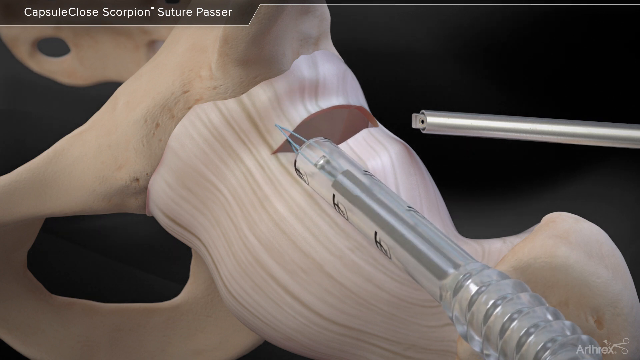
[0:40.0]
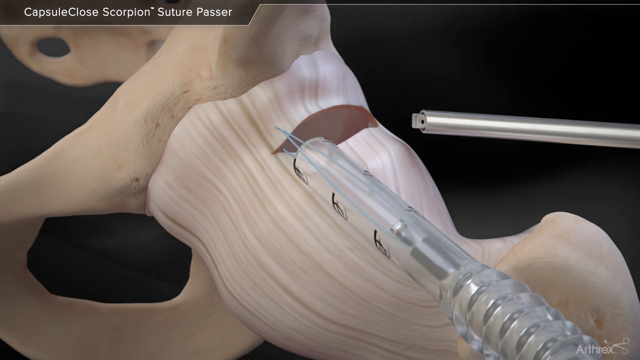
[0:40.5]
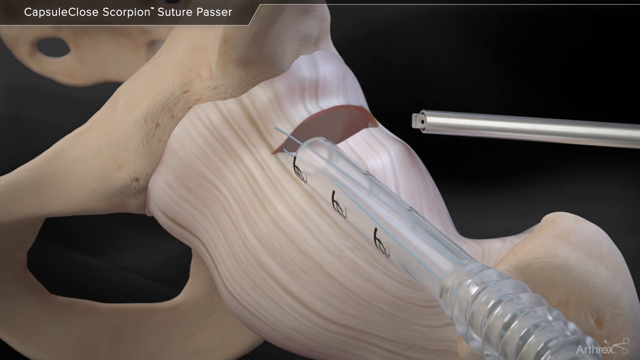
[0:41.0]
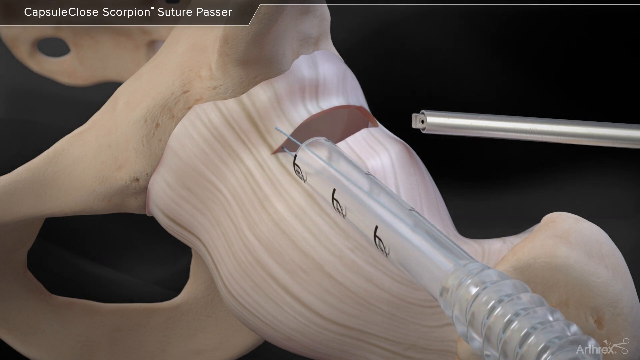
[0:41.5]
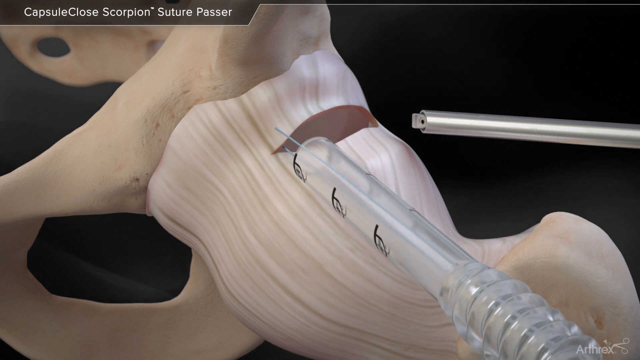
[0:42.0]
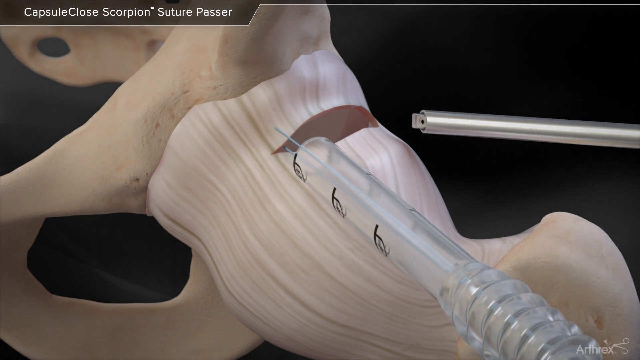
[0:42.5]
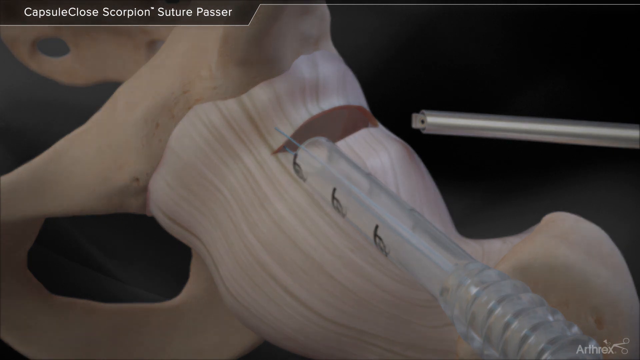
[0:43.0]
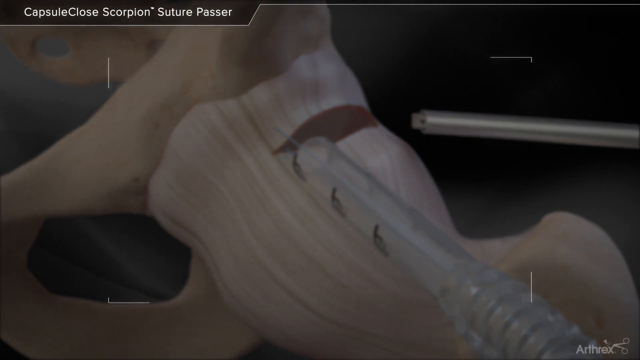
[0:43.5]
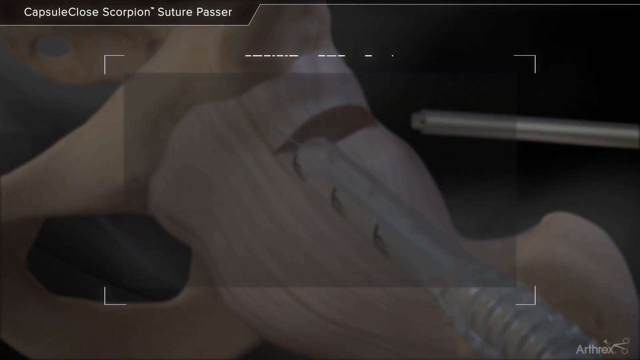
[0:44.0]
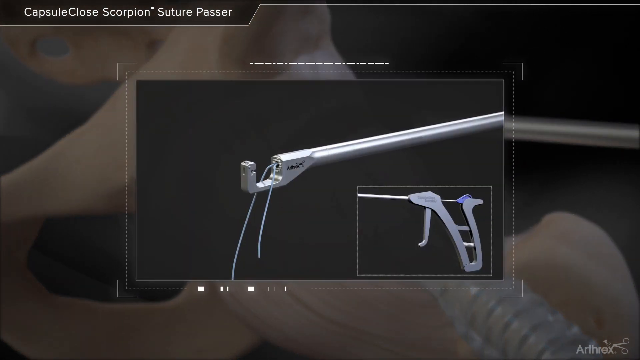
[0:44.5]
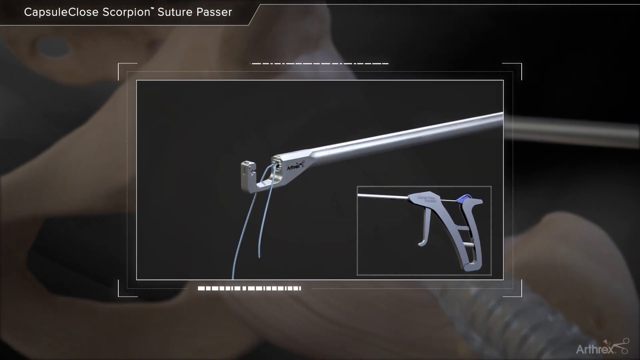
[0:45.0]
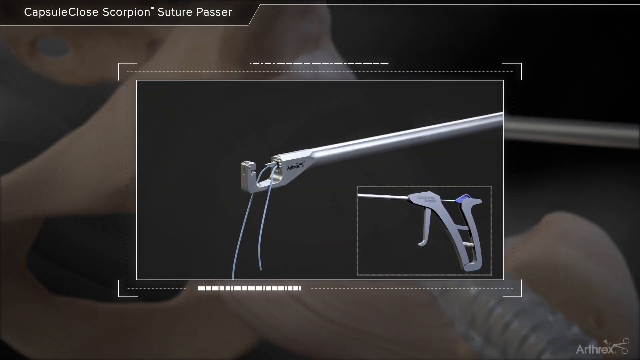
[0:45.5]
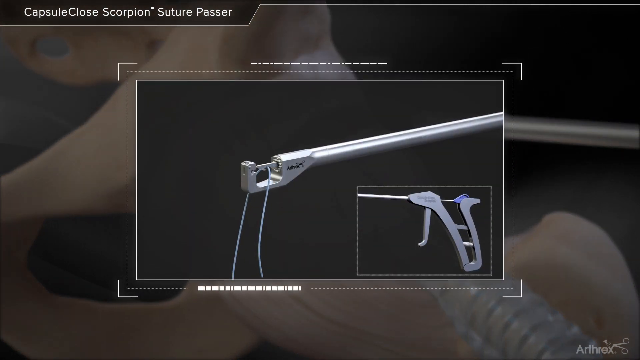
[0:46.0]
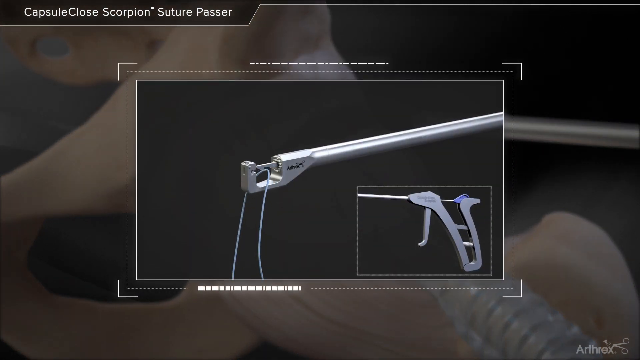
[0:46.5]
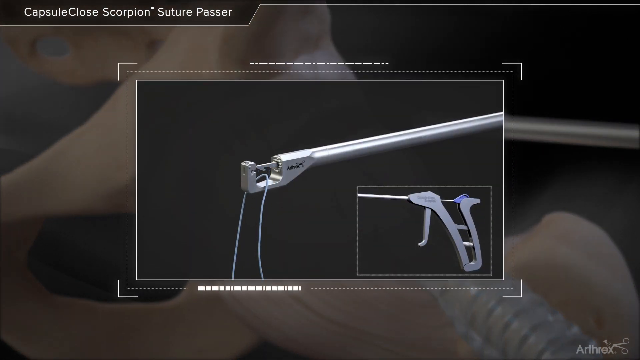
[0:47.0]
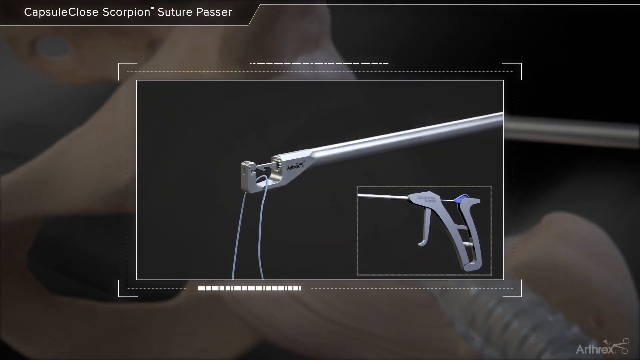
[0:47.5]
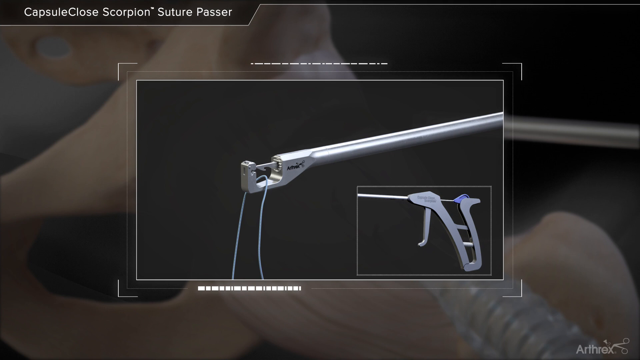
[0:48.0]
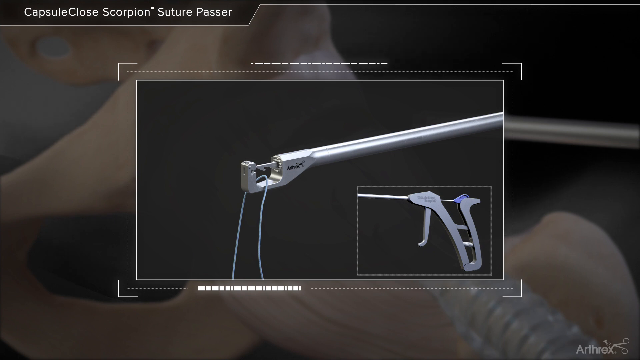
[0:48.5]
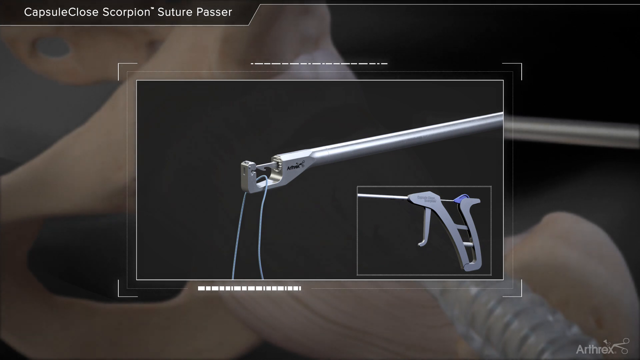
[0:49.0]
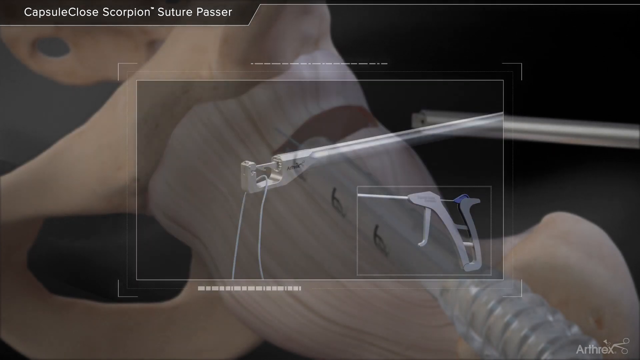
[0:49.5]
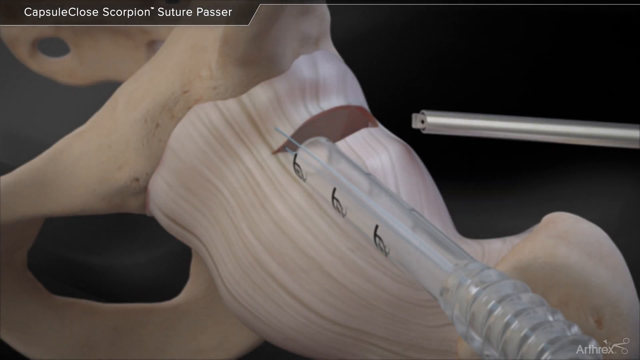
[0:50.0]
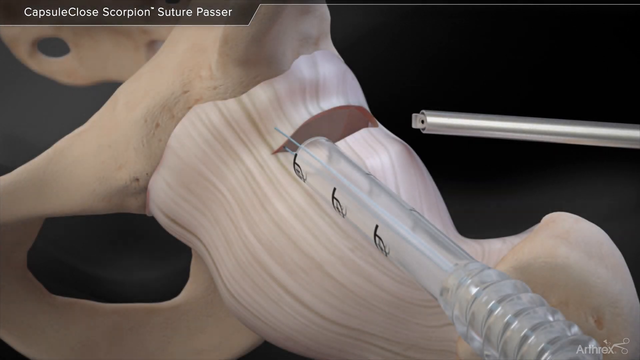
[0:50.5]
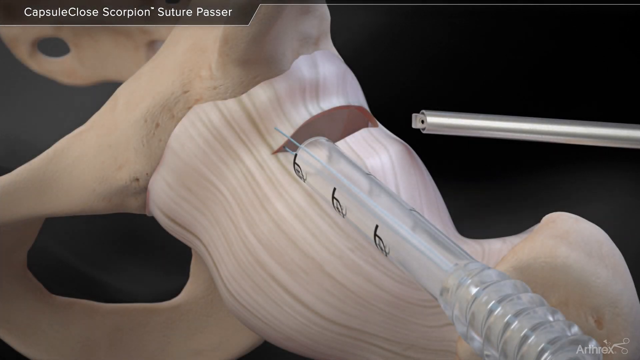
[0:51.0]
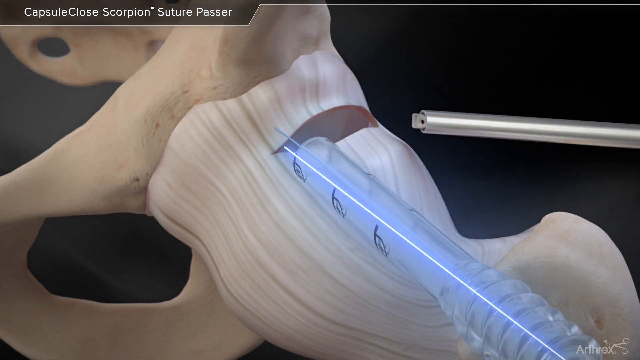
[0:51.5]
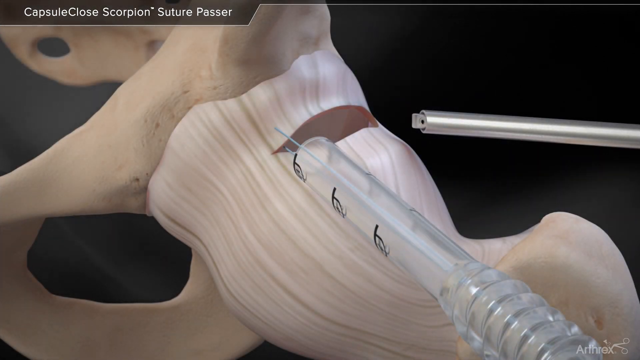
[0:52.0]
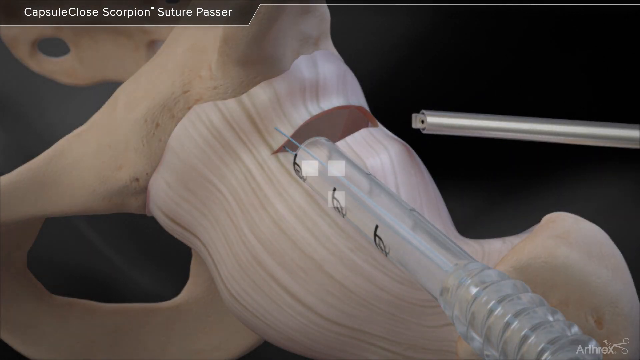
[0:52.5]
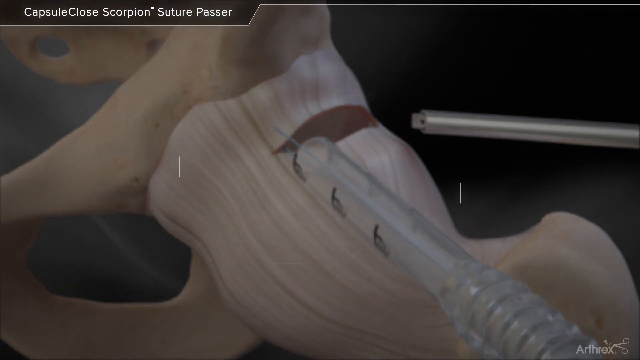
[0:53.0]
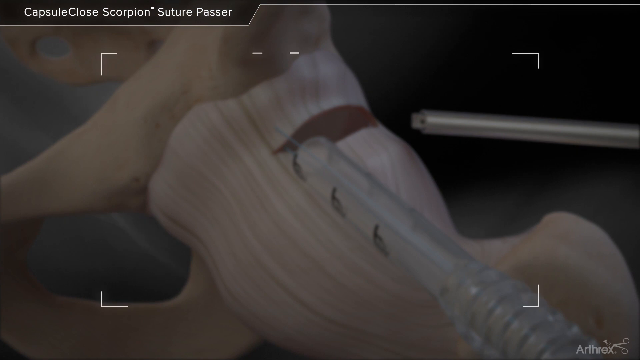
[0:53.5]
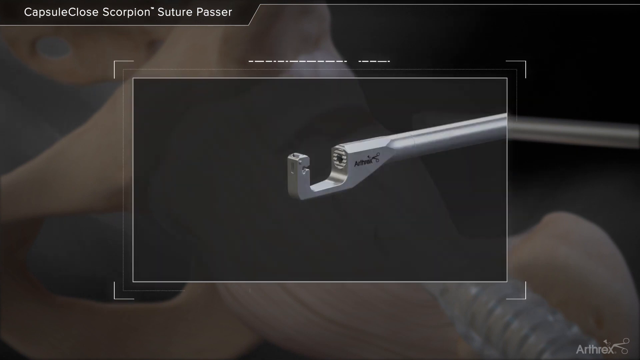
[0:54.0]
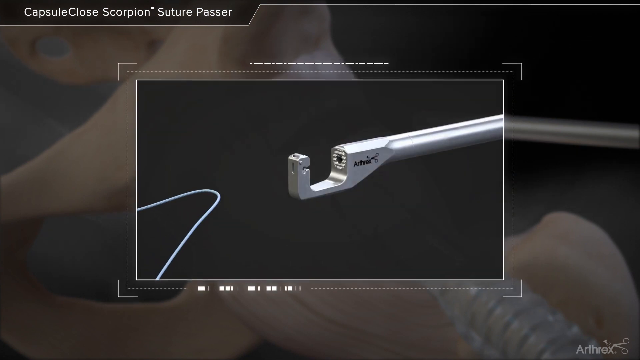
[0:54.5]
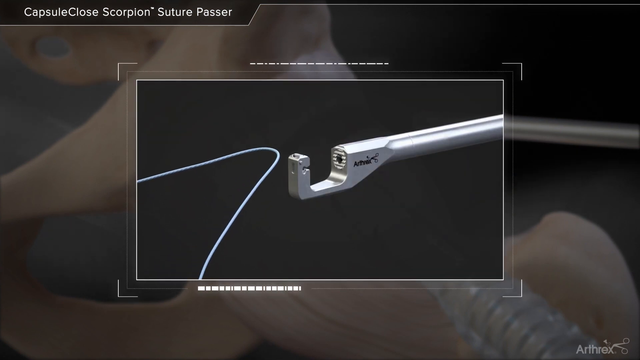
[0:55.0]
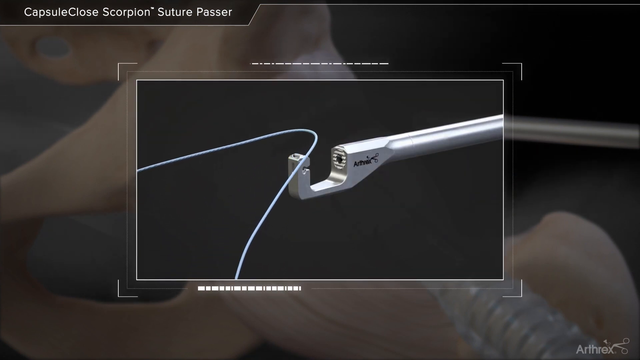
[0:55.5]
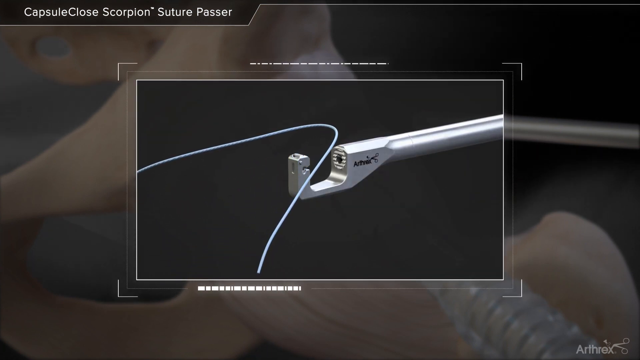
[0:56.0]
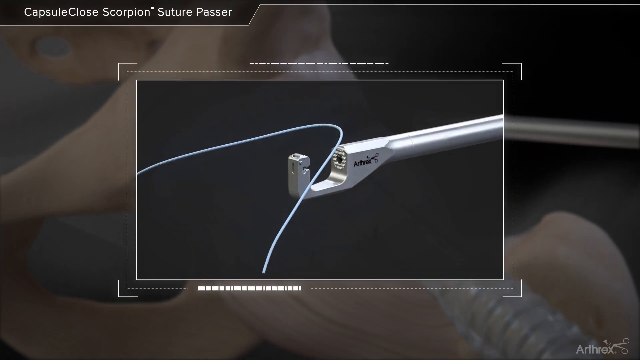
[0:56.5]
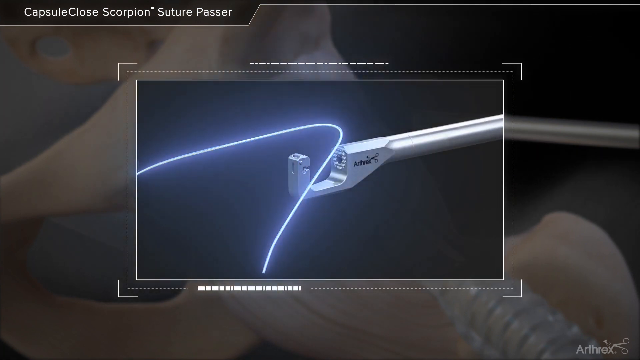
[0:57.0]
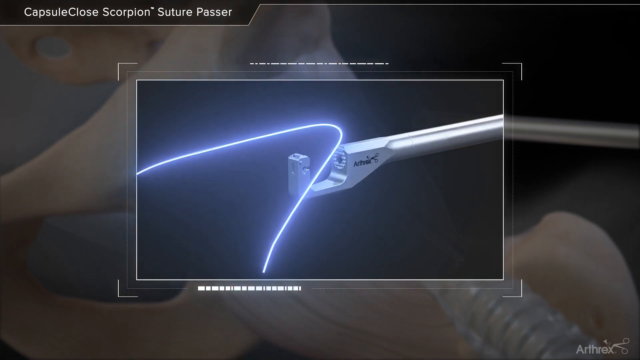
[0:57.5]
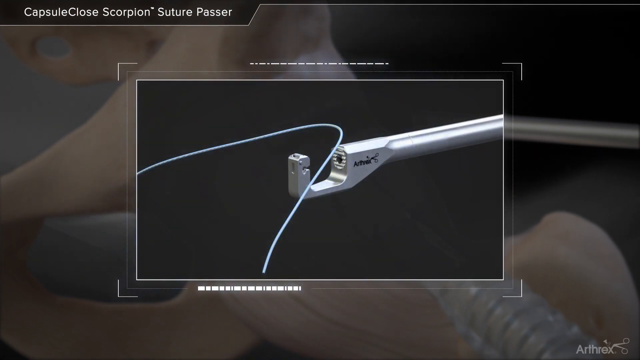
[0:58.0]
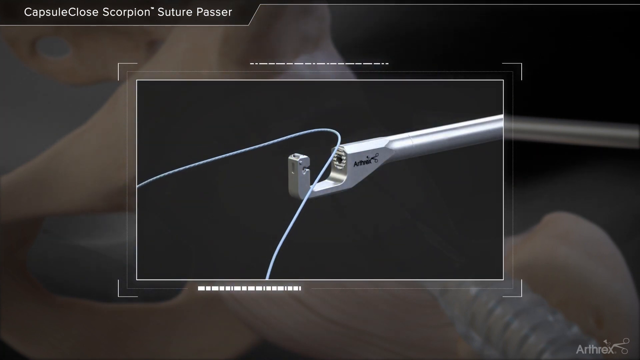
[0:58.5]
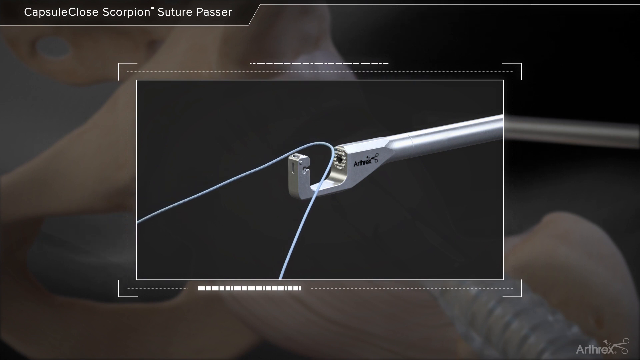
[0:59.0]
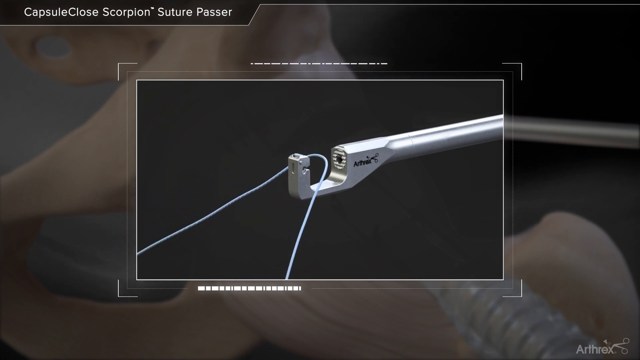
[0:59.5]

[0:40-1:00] The background looks beige-white, like the color used to demonstrate bones, and the imagery looks 3D. On the left side there is what could be a needle, beside a space shaped roughly like an oval, and something appears to get sucked out of it using a needle. A zoomed-in image then shows a metal loop on the end of a tool that looks like an ear-piercing tool.